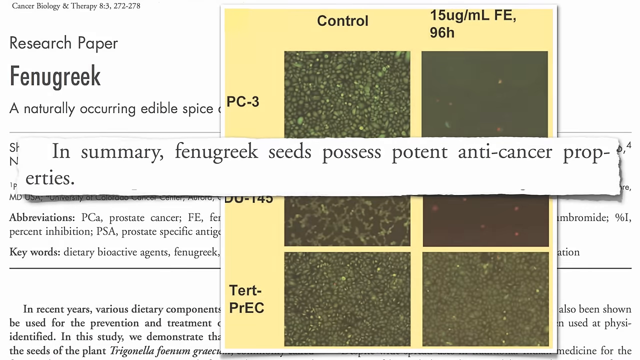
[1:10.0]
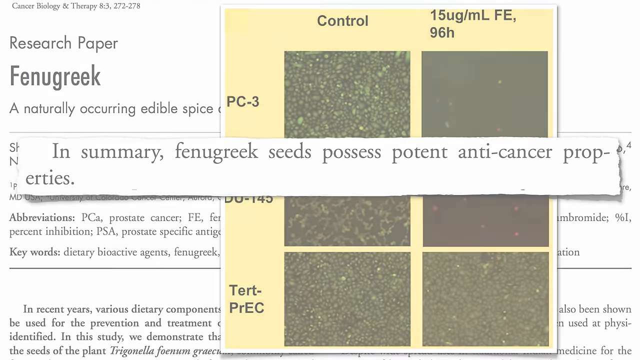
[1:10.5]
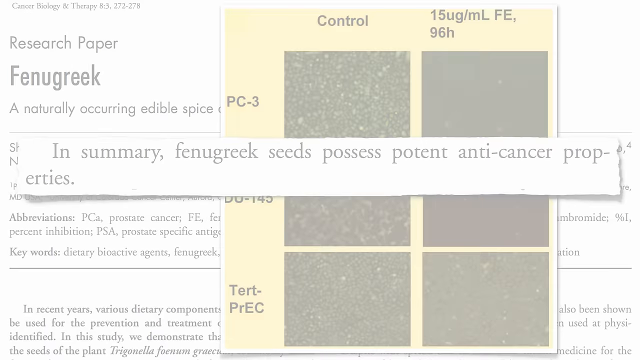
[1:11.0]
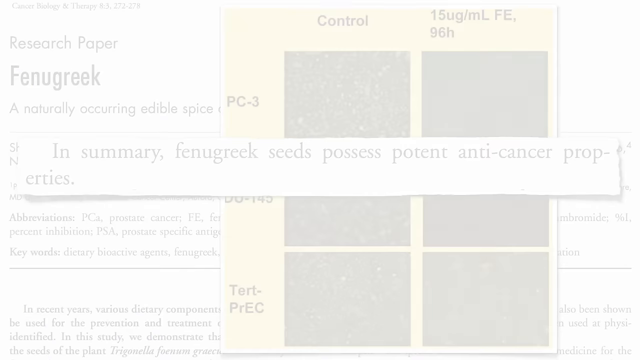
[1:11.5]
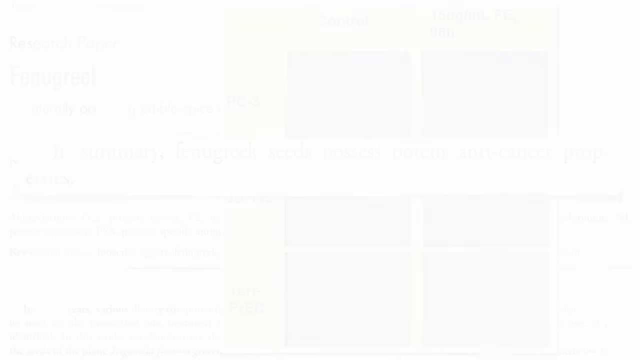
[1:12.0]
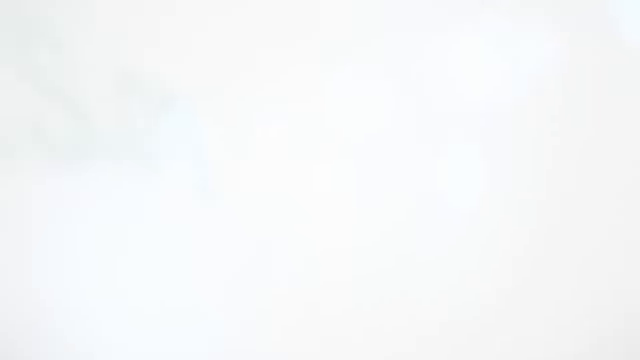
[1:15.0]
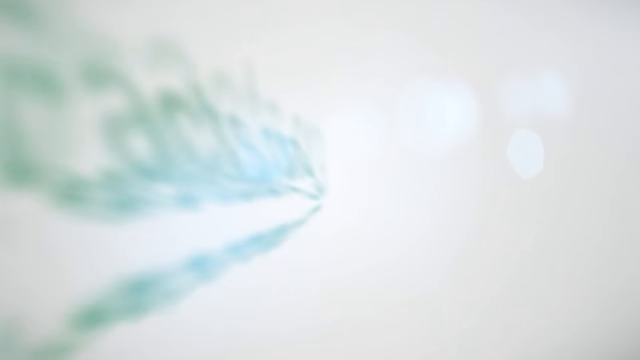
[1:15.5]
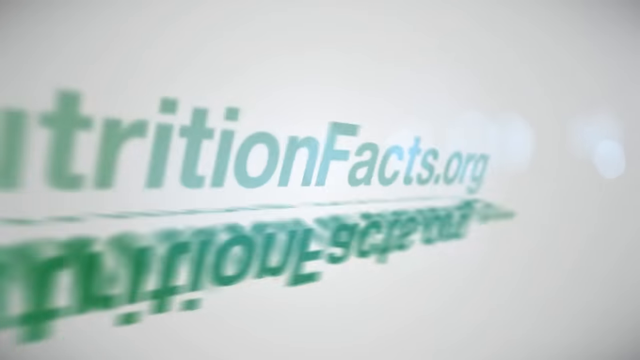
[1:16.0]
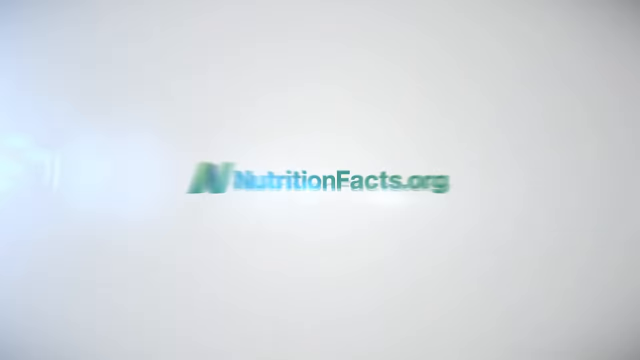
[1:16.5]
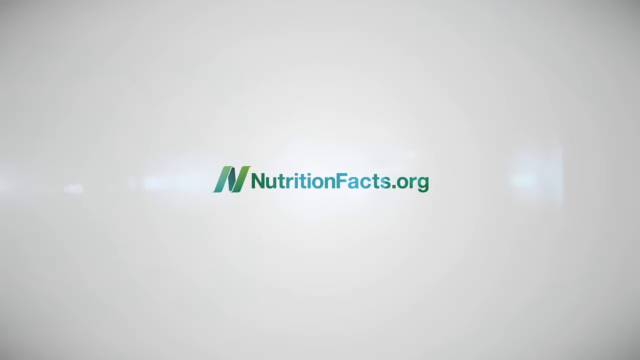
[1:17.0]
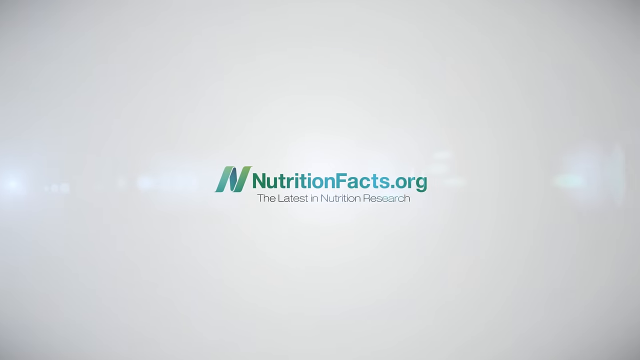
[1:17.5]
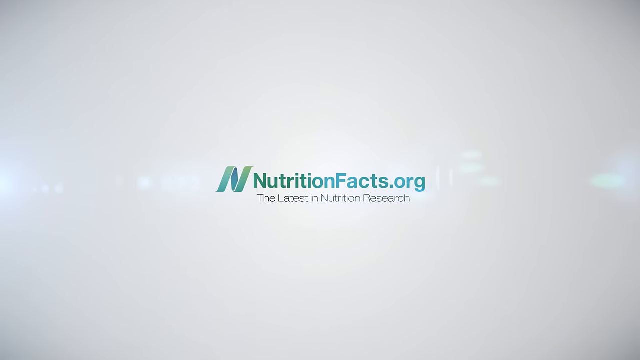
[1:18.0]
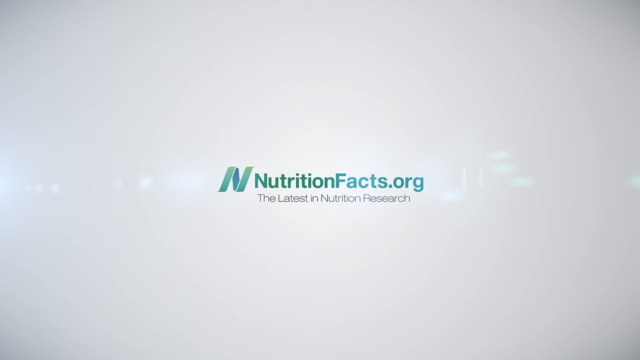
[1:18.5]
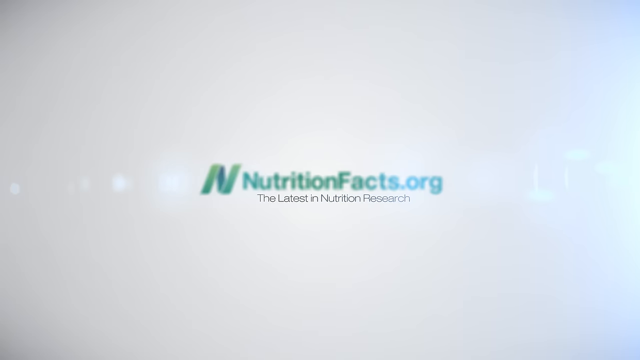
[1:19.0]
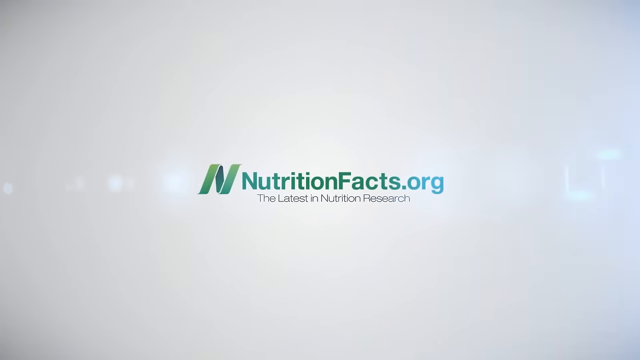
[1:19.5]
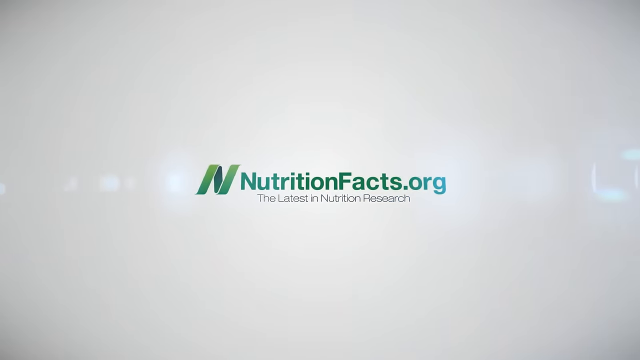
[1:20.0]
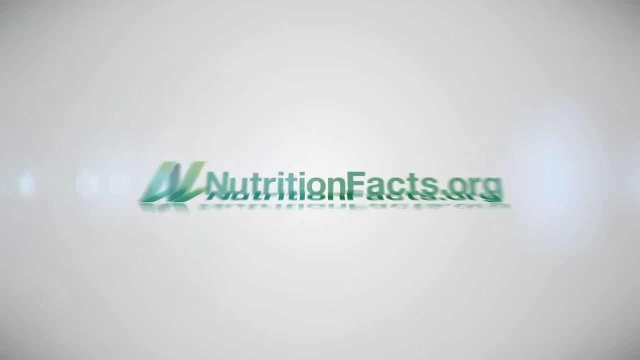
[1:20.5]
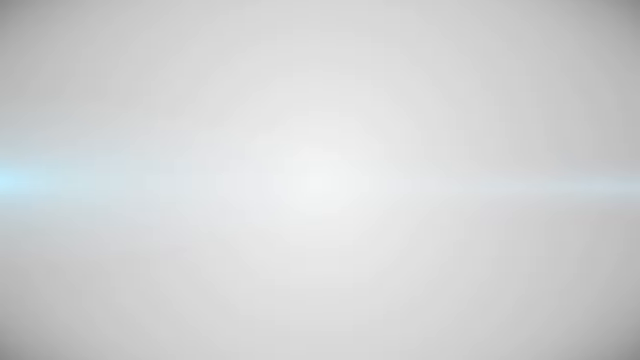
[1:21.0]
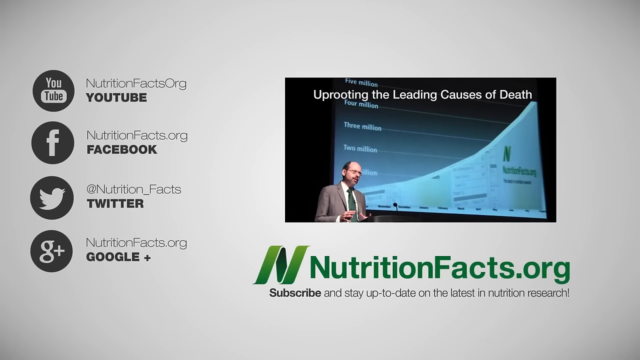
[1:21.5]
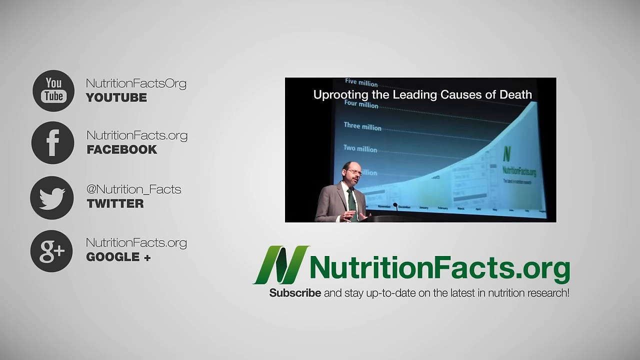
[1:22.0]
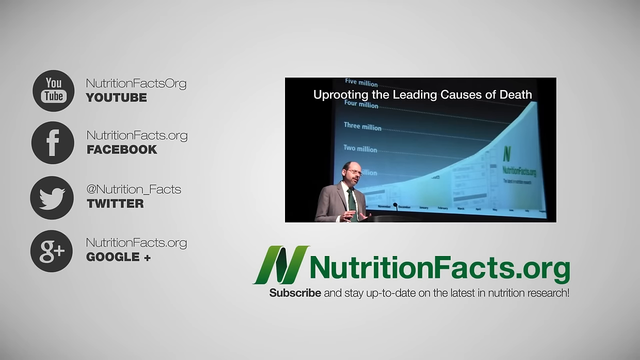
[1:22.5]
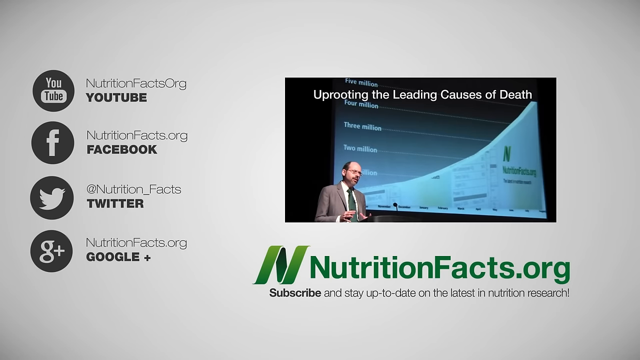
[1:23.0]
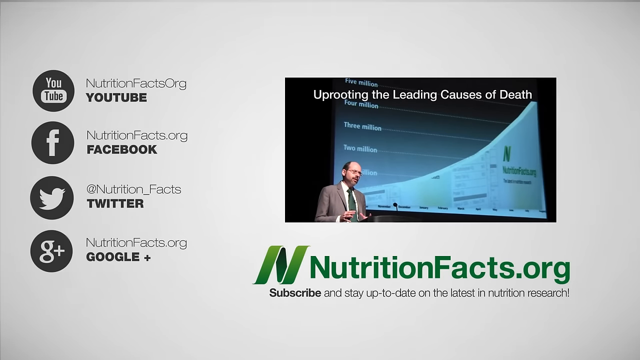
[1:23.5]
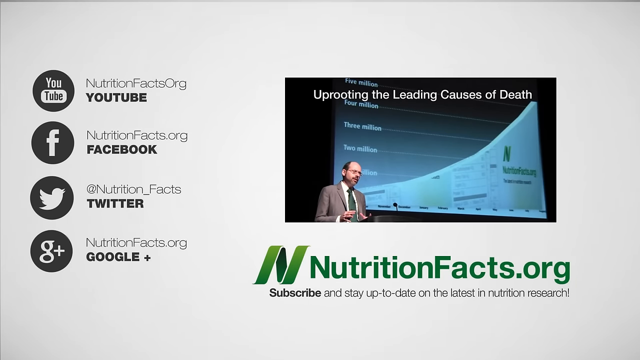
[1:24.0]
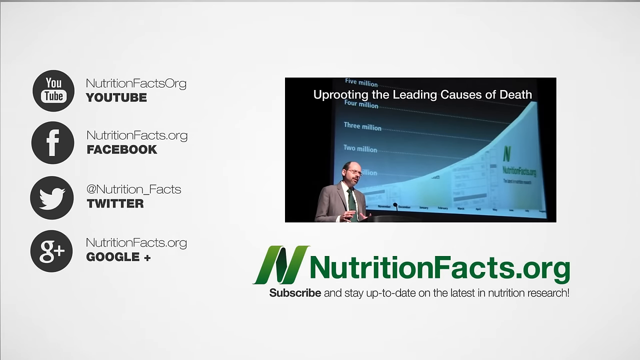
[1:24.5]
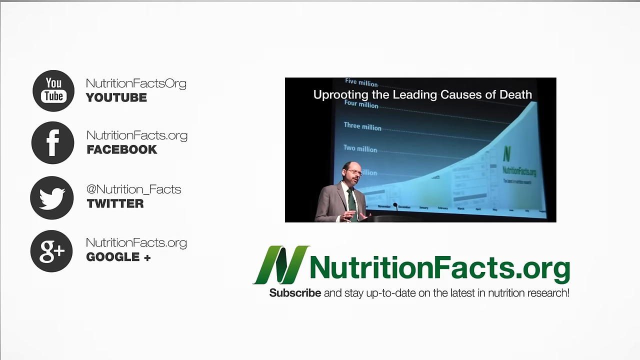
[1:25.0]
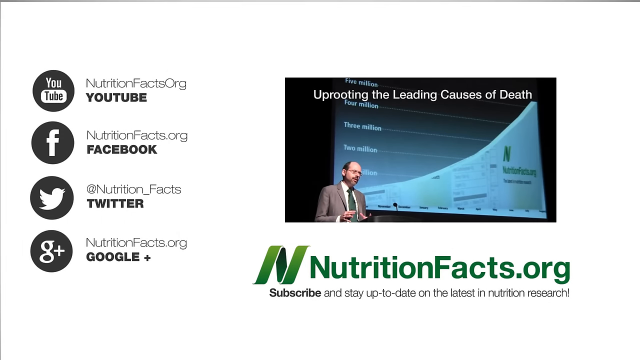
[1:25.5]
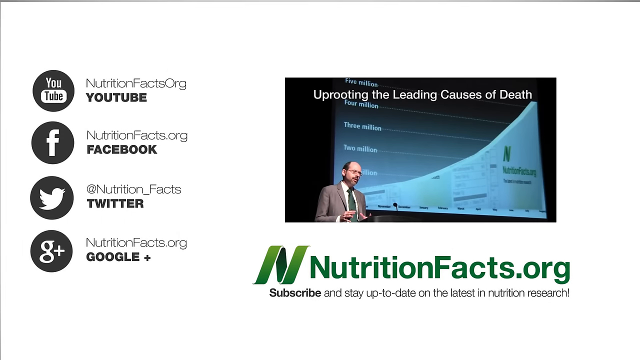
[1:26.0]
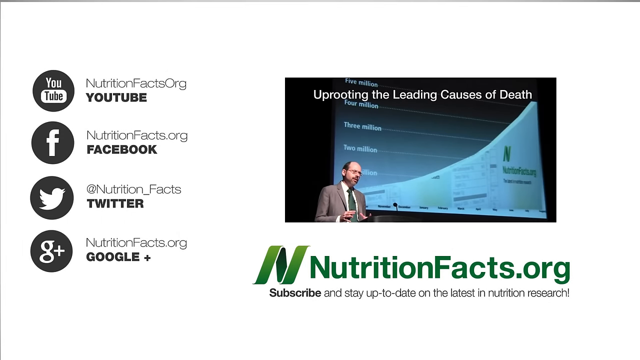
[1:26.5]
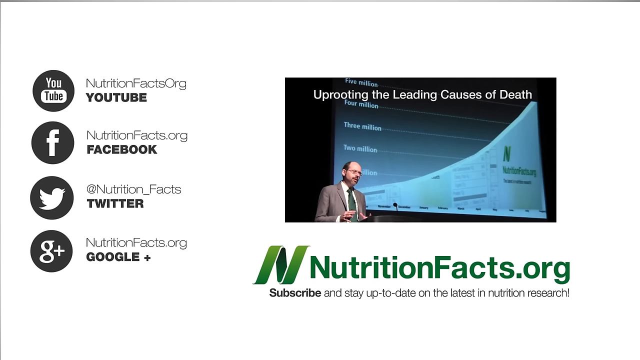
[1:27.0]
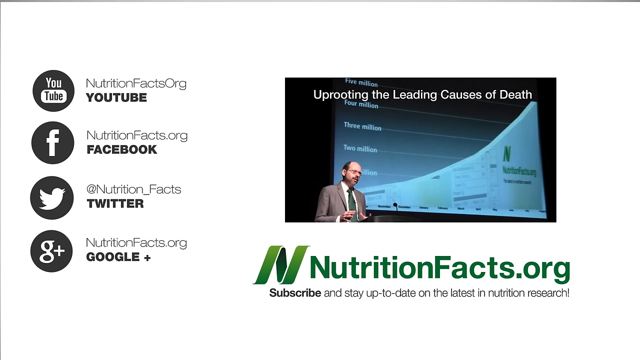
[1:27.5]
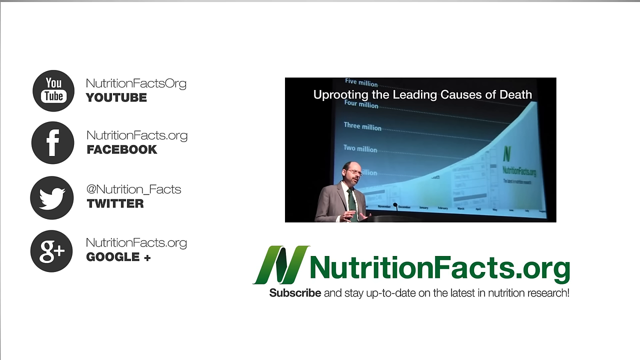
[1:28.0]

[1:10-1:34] The whole screen fades out to white, and twirling letters come onto the screen: first the stylized N, then "nutritionfacts.org" as in the opening screen. It starts to shrink, and "the latest in nutrition research" appears underneath. A green line twirls, and another screen follows. This screen has a column on the left with social media links. On the right, taking up about two-thirds of the screen, is a picture reading "uprooting the leading causes of death" with a graph and a man in the lower left wearing a suit, a green tie and glasses, with a receding hairline. Underneath are the stylized N and "nutritionfacts.org" in green, and below that "subscribe and stay up to date on the latest in nutrition research," on a light colored background.